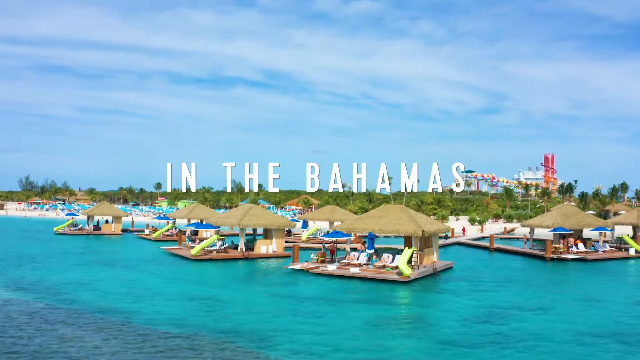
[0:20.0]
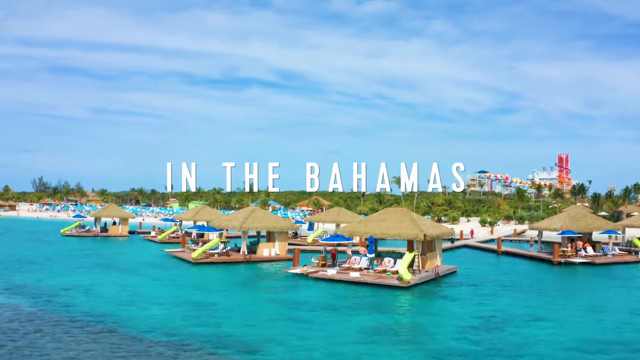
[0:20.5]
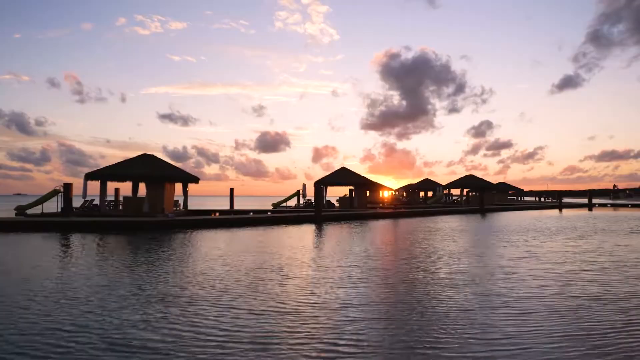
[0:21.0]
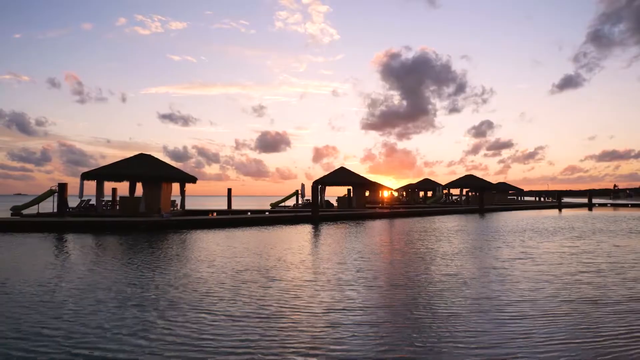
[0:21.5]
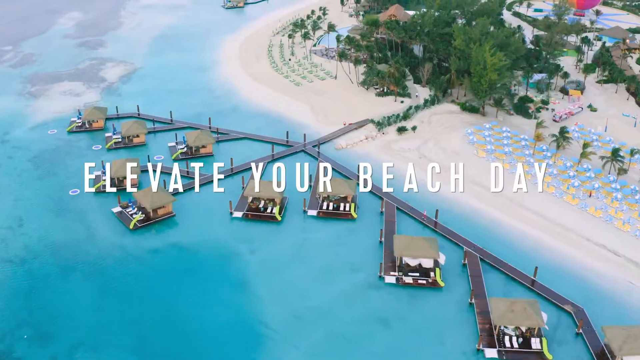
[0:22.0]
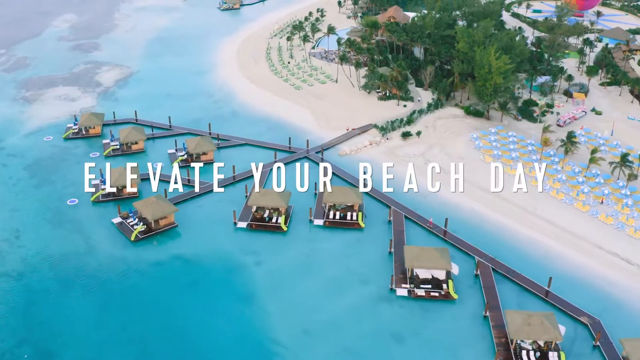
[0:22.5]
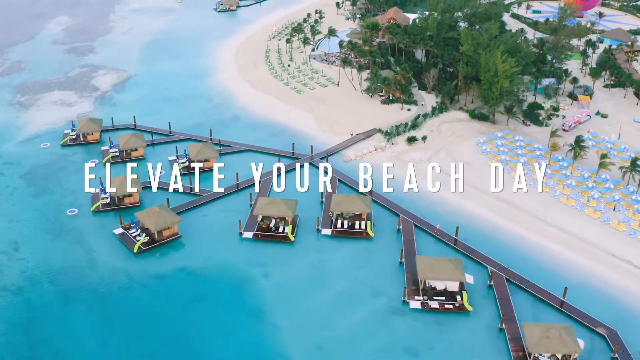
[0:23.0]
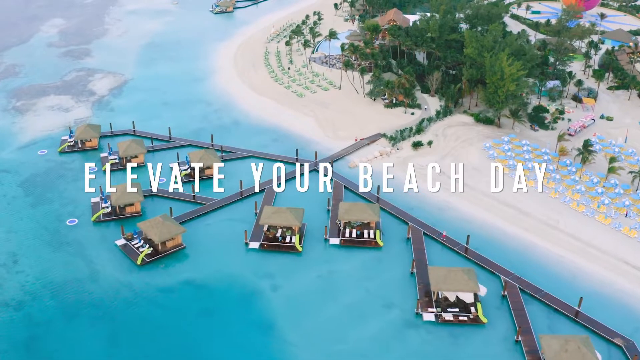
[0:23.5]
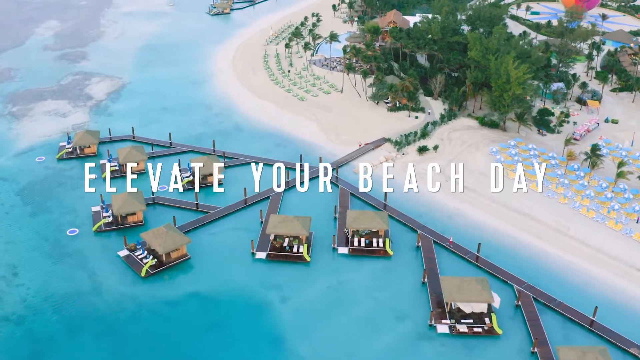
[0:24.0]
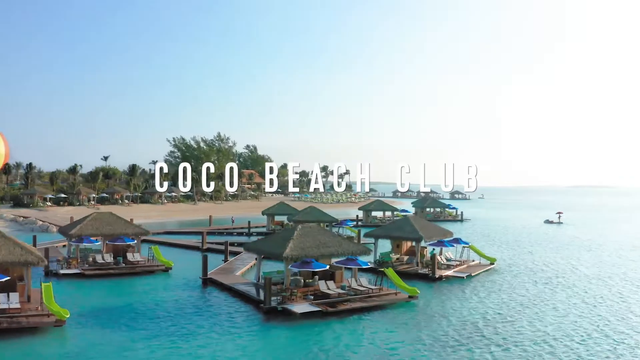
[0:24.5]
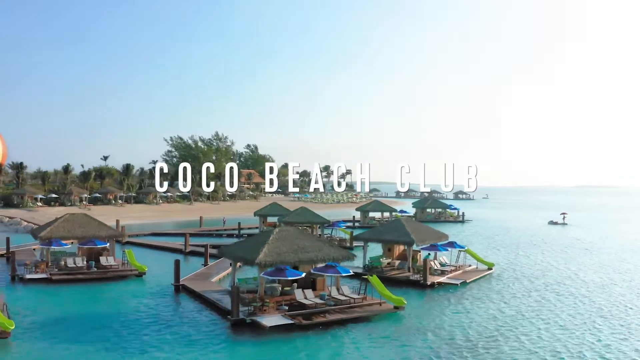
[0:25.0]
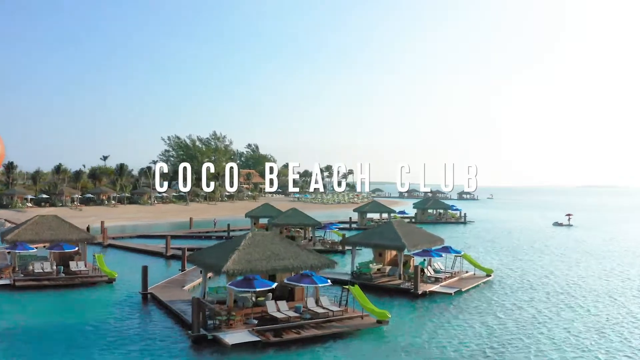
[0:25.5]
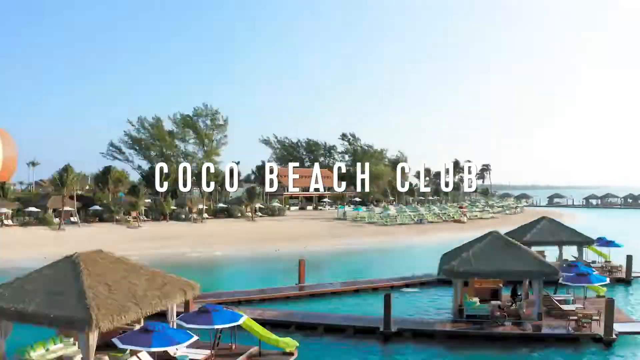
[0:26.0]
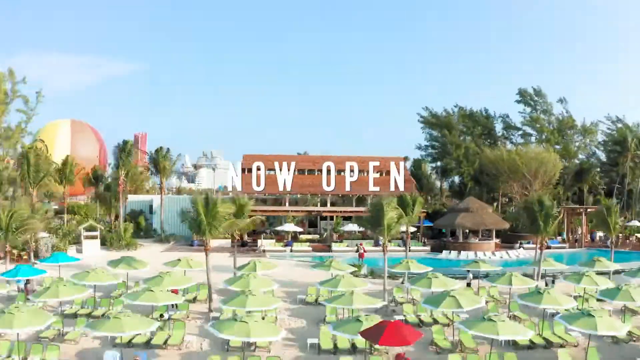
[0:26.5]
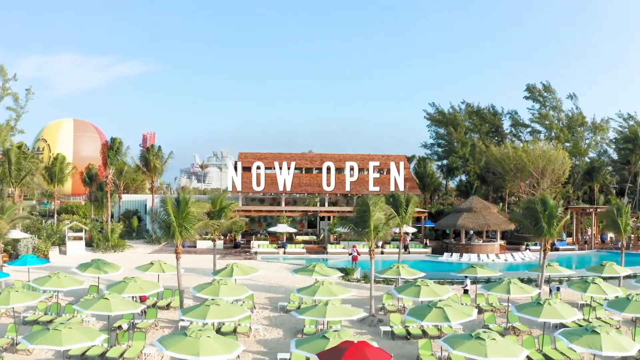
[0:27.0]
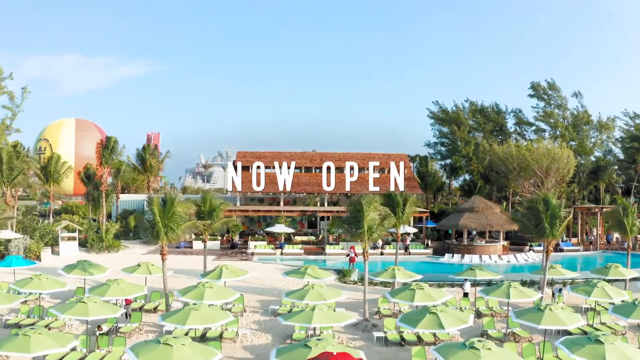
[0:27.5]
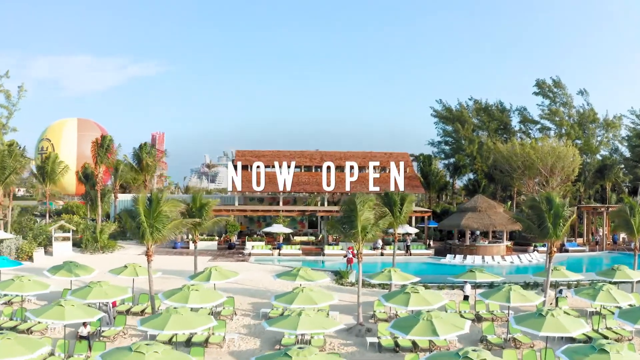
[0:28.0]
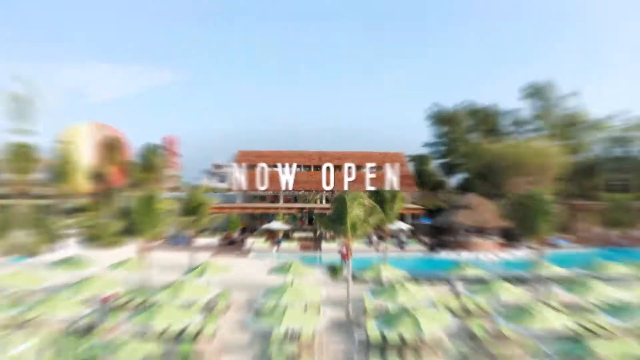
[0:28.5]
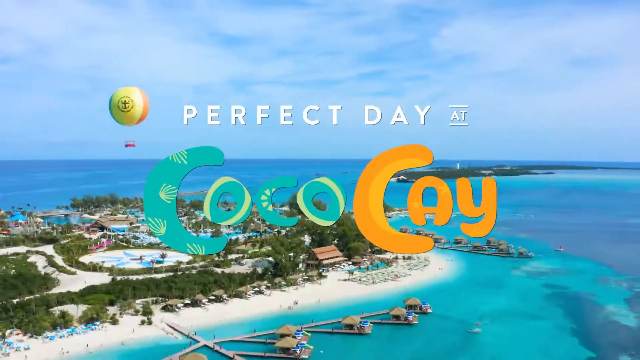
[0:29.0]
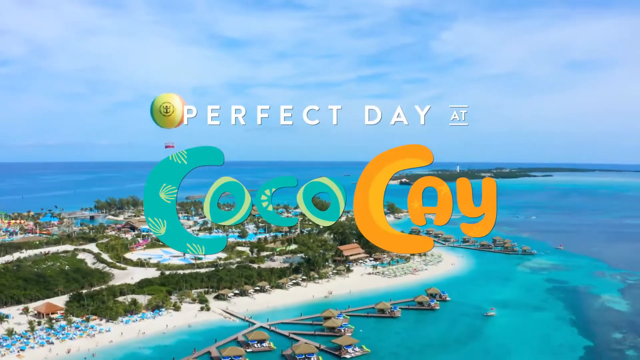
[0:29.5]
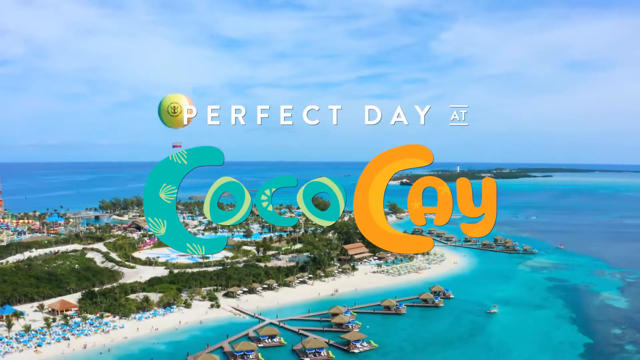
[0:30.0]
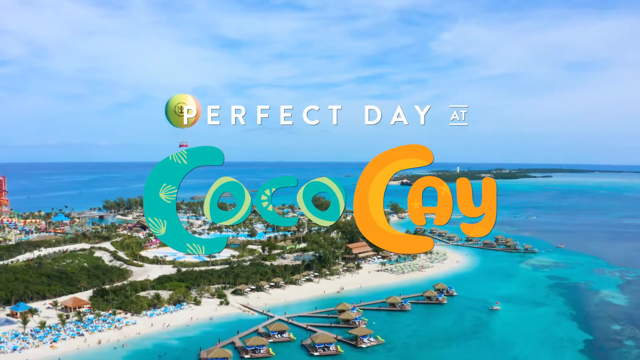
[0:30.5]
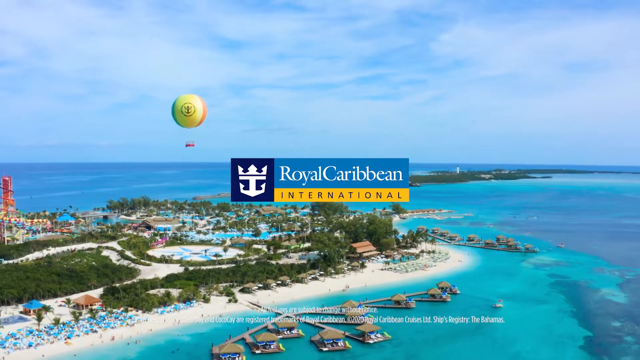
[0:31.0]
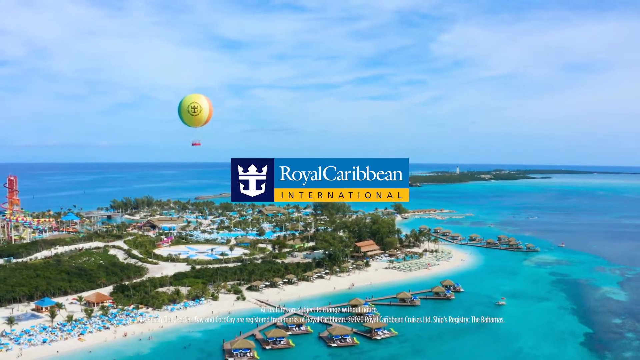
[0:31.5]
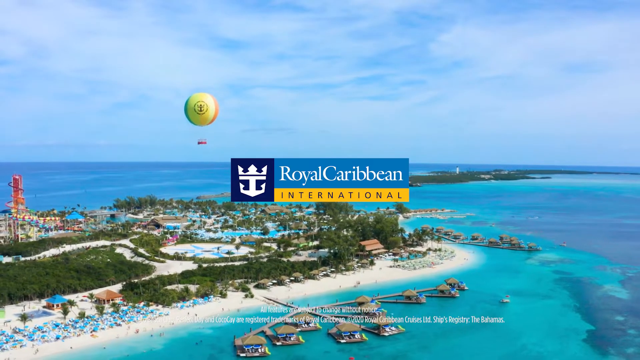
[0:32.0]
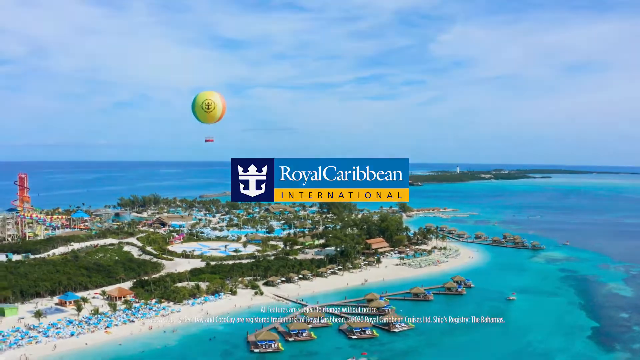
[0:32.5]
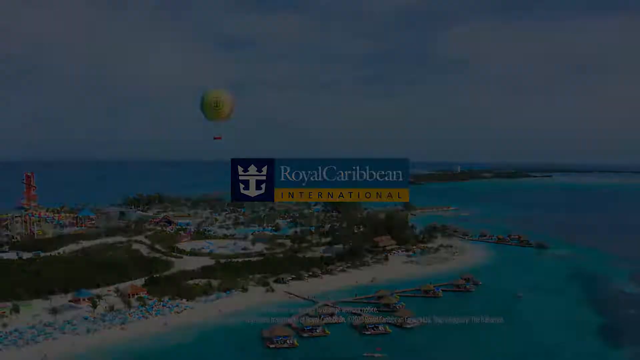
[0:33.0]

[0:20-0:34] The view focuses on some cabanas that have sunbeds and a slide going into the sea; on the one closest to the camera, a butler is on board. Seven cabanas are visible, with the turquoise sea below them. Behind them is a strip of white beach followed by a strip of palm trees and greenery. In the background is a ship, the Royal Caribbean cruise, and behind that are clouds and blue sky. White text saying "in the Bahamas" appears. The camera angle changes to show the same cabanas from behind, looking out toward the horizon, with the sun setting through the cabanas and the sky a pink, red, orange colour from the sunset. The view switches to an aerial view of the cabanas from above, showing the private walkways that reach each of them. The sea is clear blue, and the reefs below the surface are visible because the water is so clear. On the beach, one side has green parasols and the other side has blue parasols, with palm trees behind. The white text "elevate your beach day" appears. The camera pans round to a lower view of the cabanas, and the white text changes to "Cocoa Beach Club". The camera then pans very quickly, showing the reception, and the white text changes to "now open". The view zooms out to an aerial view of the whole island, and the white text changes to "perfect day at" followed by the words "Coco Cay". "Coco" is in a turquoise green font with little reef drawings on the seas, and "Cay" is an orange sun colour. This is replaced with the Royal Caribbean Cruise Ship International logo, and the screen then goes black.